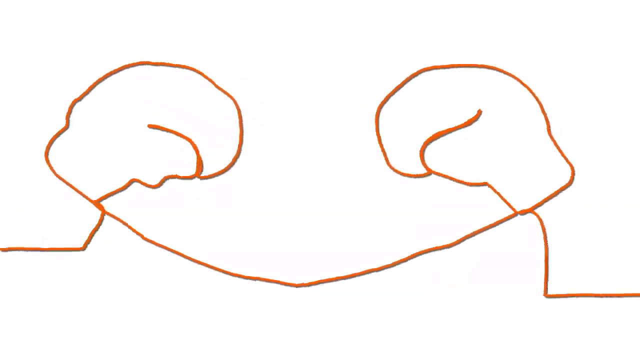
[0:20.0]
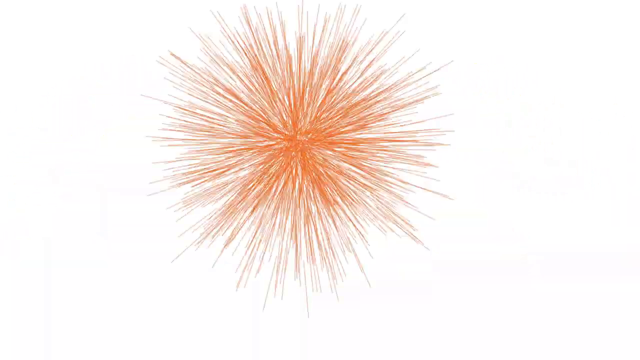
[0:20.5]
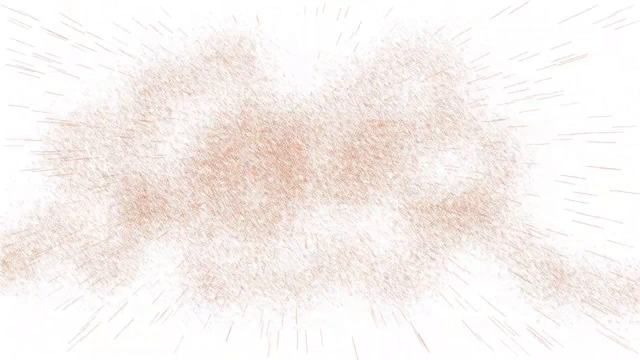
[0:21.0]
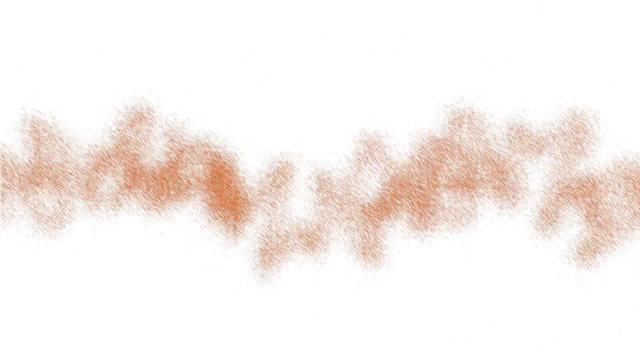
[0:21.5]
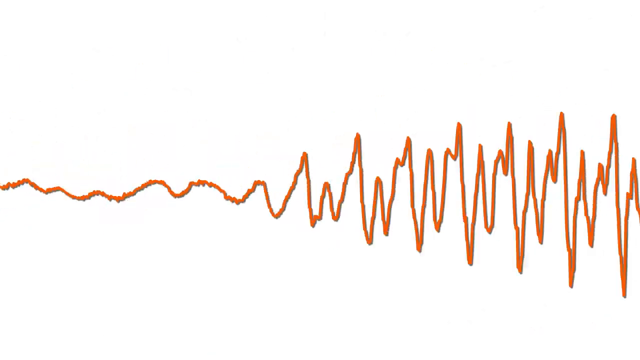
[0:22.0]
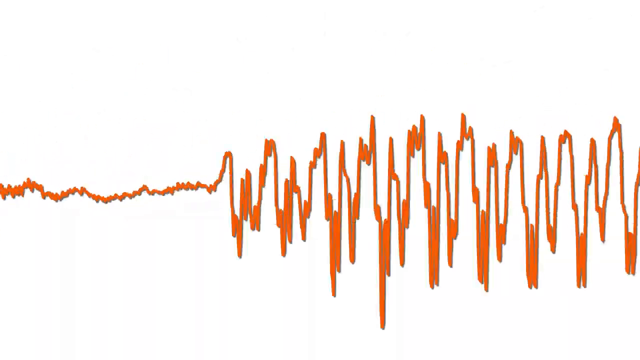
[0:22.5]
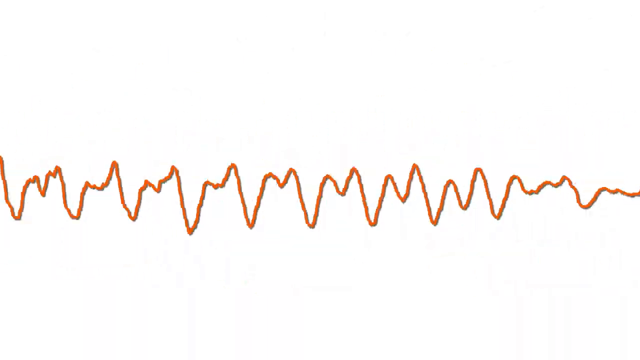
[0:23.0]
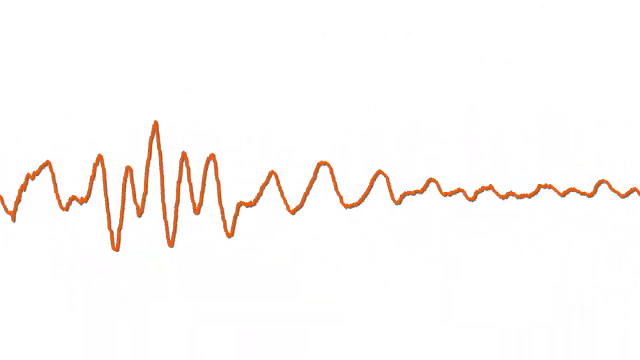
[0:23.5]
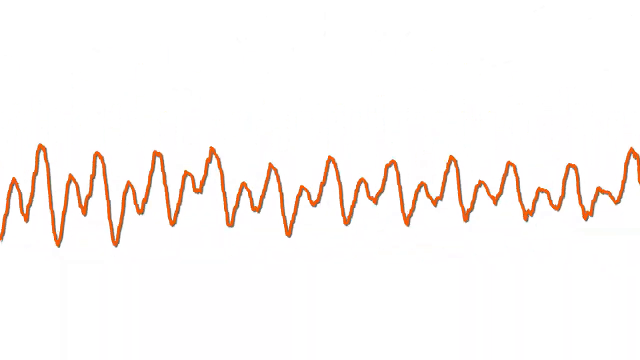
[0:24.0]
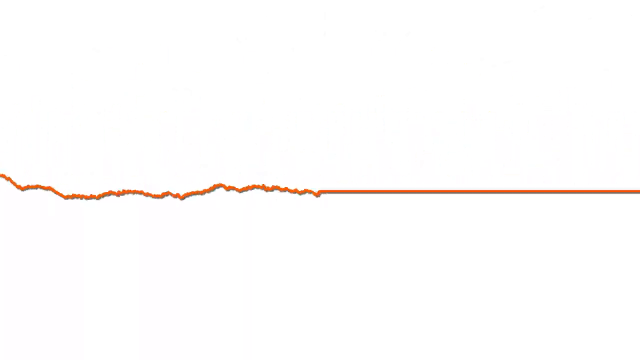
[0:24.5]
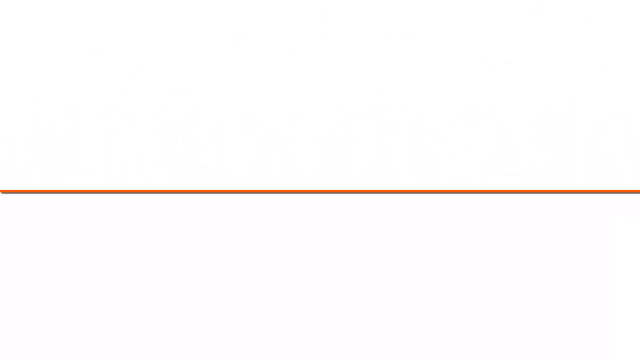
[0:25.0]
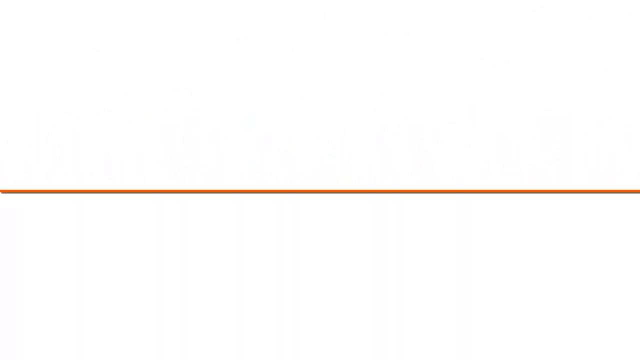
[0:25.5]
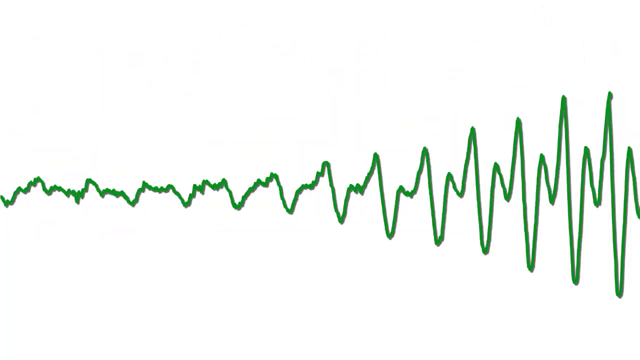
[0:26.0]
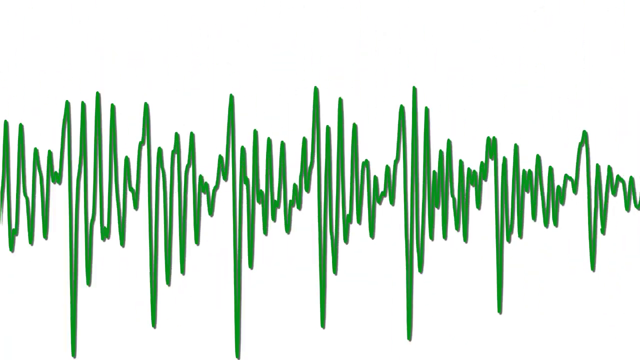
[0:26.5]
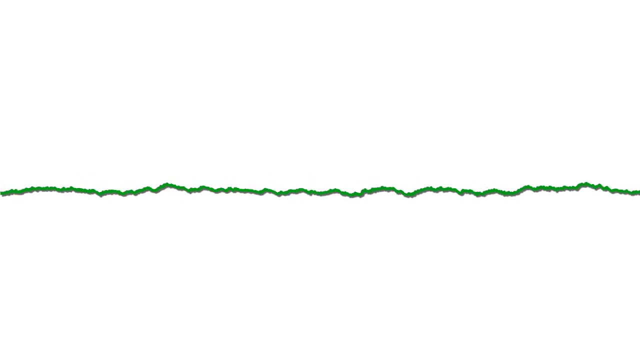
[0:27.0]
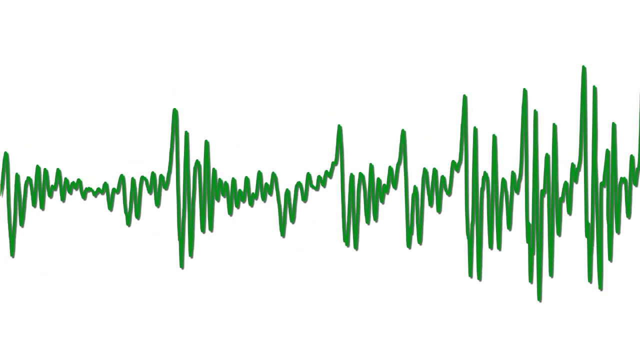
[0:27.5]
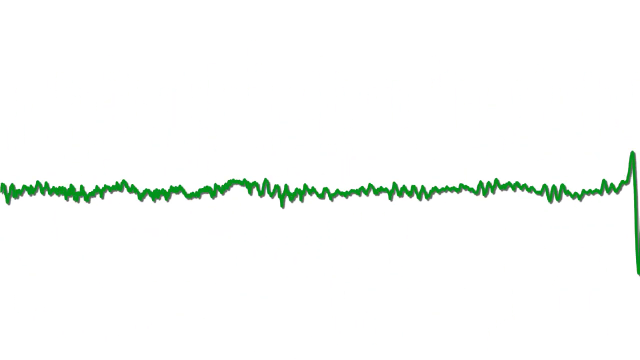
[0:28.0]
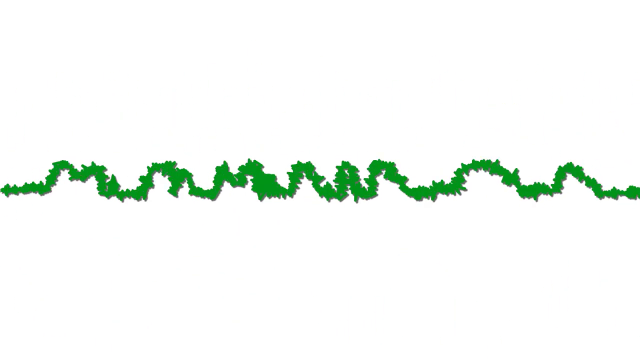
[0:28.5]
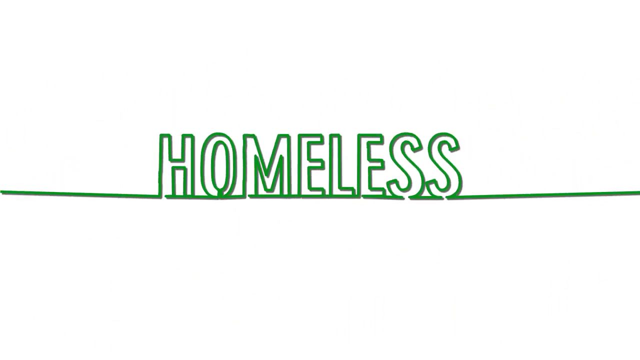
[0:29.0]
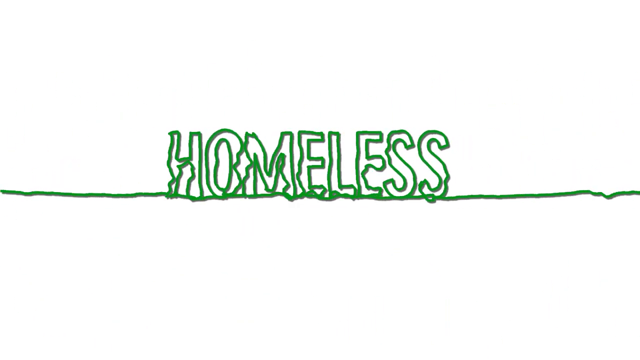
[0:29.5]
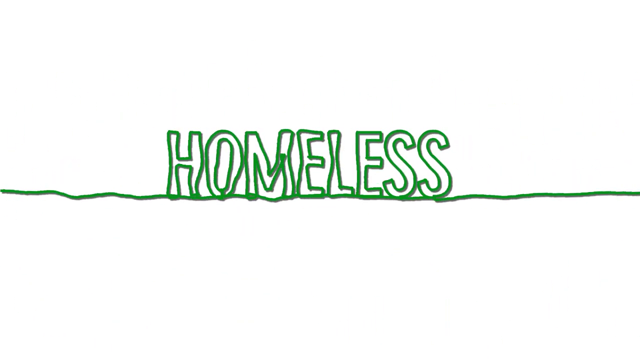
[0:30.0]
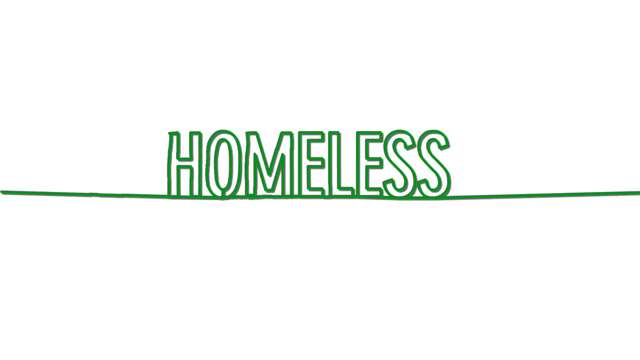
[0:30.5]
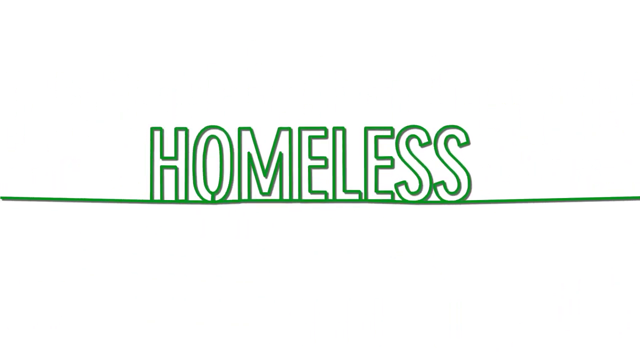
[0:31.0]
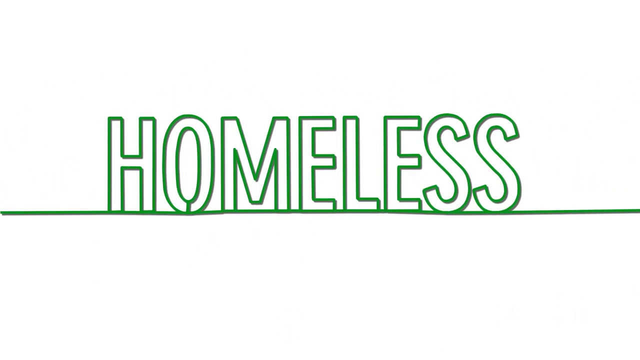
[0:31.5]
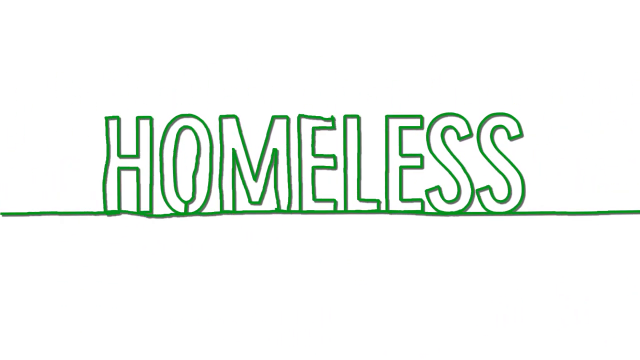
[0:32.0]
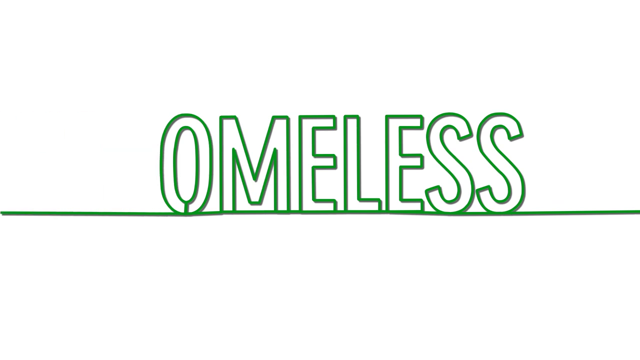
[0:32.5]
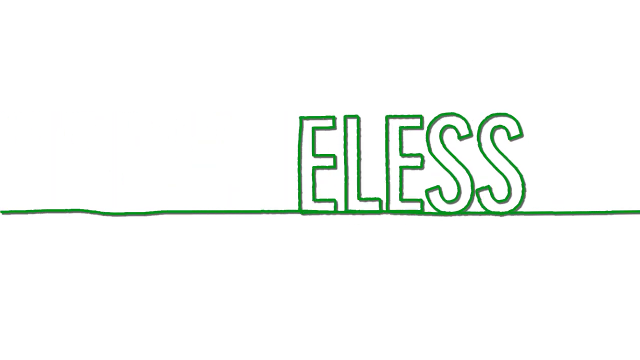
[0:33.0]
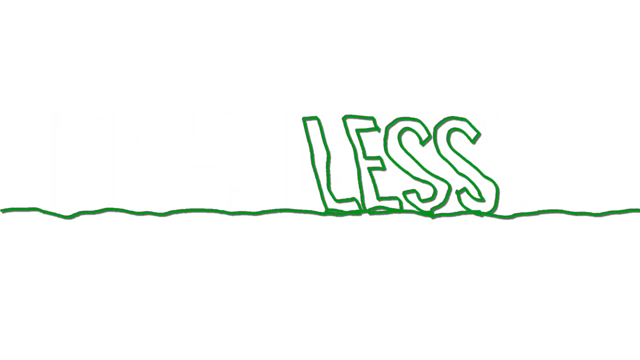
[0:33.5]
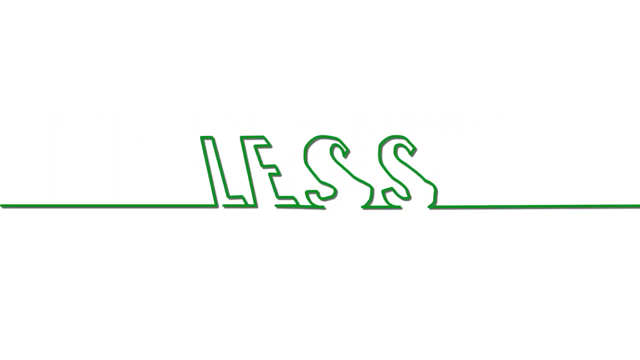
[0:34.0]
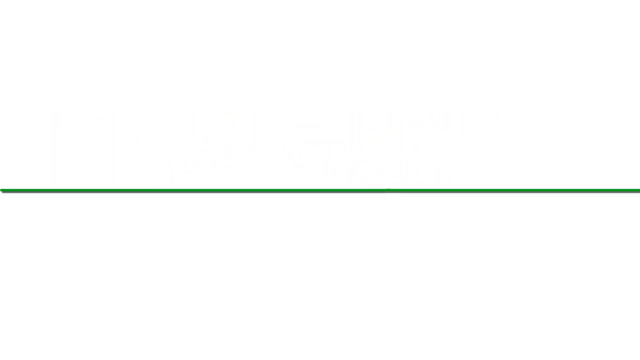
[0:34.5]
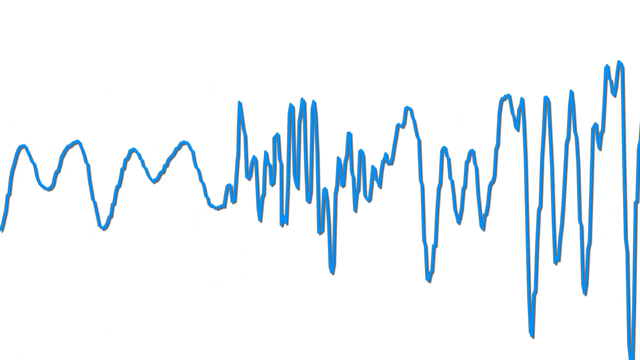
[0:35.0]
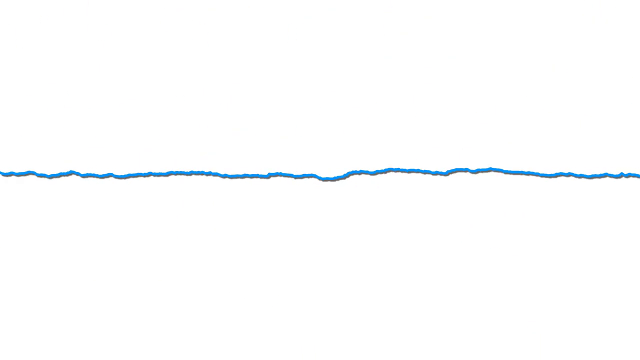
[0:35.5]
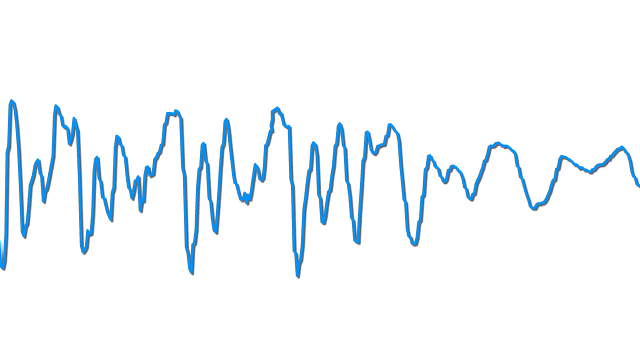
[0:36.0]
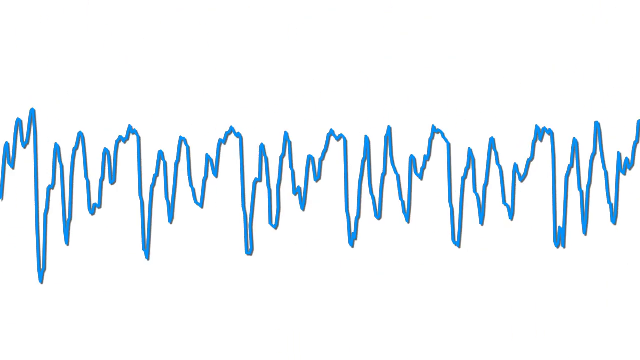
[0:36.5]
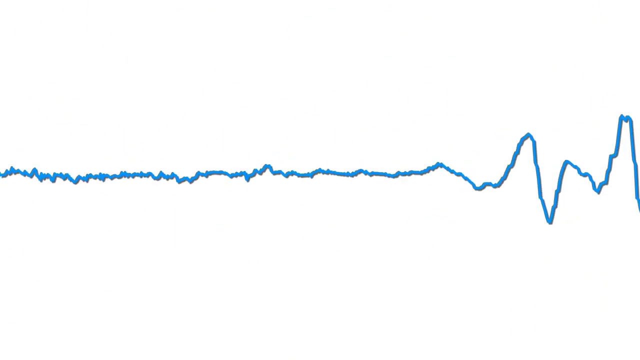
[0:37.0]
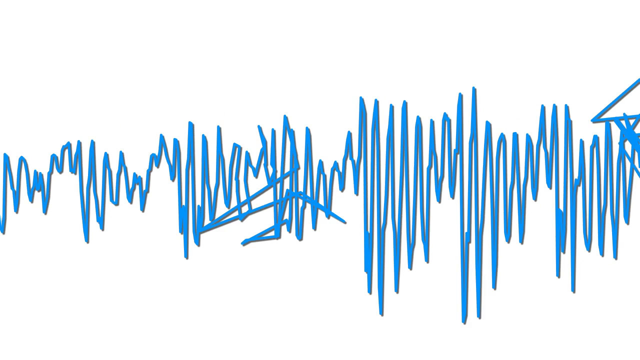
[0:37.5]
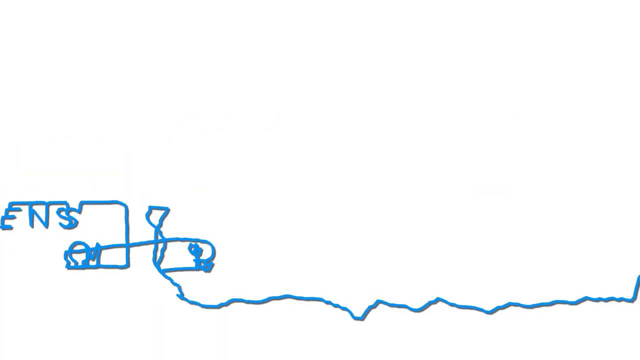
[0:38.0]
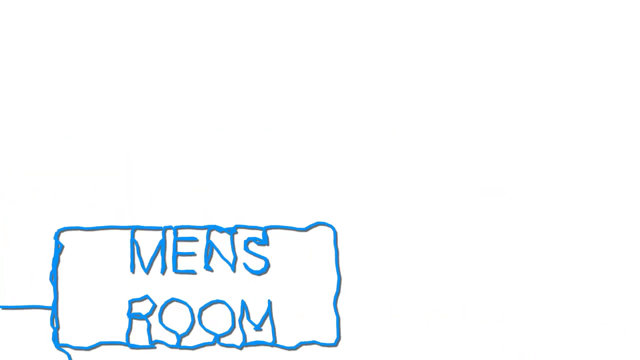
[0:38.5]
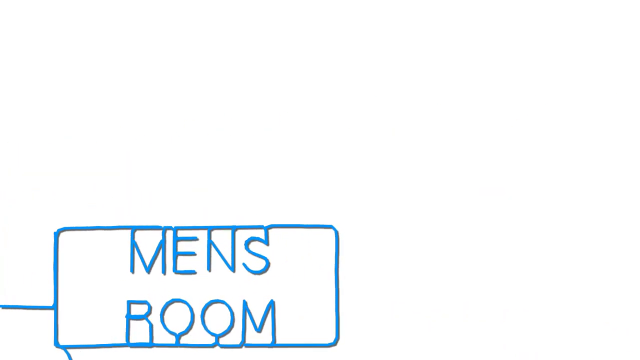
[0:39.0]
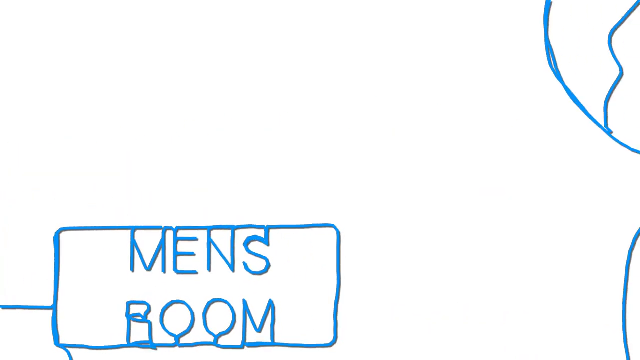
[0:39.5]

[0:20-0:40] The boxing gloves move inward toward each other and hit, causing a big explosion of lines from the point of contact. The lines seem to disappear into very small, faint dust, then form back into wavy sound lines that wave up and down, slow down and become a static horizontal line. The line suddenly switches to green and starts oscillating intensely again, then fizzles into the word "homeless" on top of a horizontal line. A little shiver goes through all the letters, the view zooms in a bit, and a few more shivers wave through the letters. The letters move to the left until only the word "less" remains. "less" leans to the left and then shrinks down into the horizontal line, melting into it. The horizontal line turns into a blue oscillating wave of sound lines, which forms into a blue rectangle with "man's room" in it.